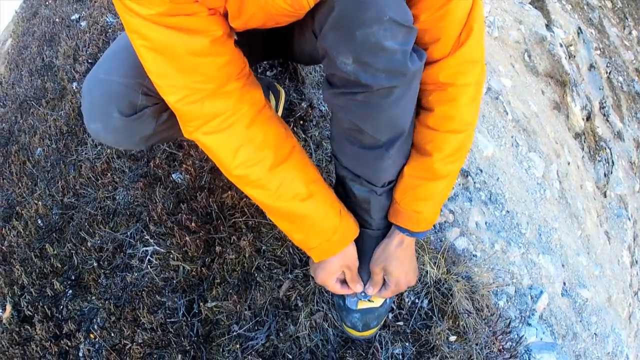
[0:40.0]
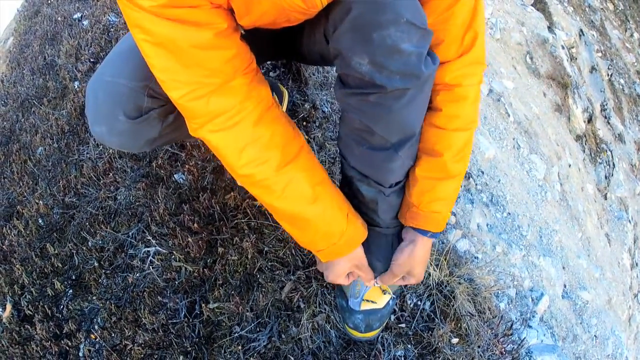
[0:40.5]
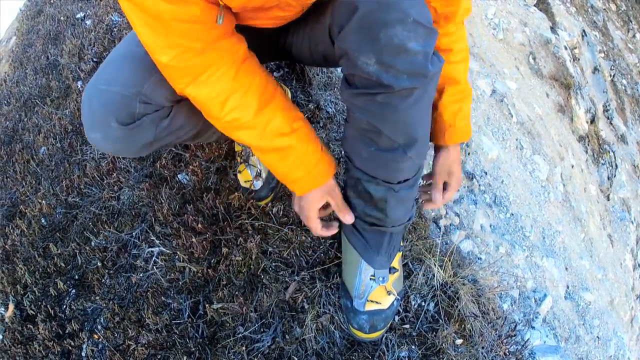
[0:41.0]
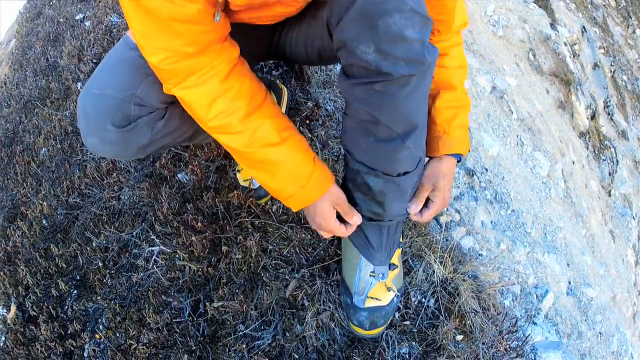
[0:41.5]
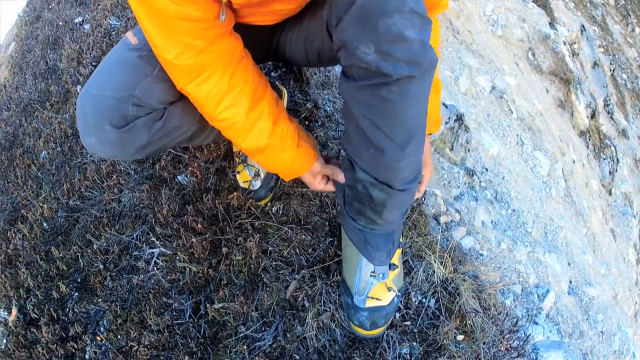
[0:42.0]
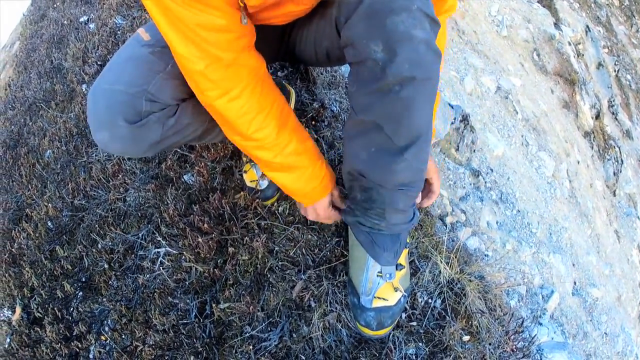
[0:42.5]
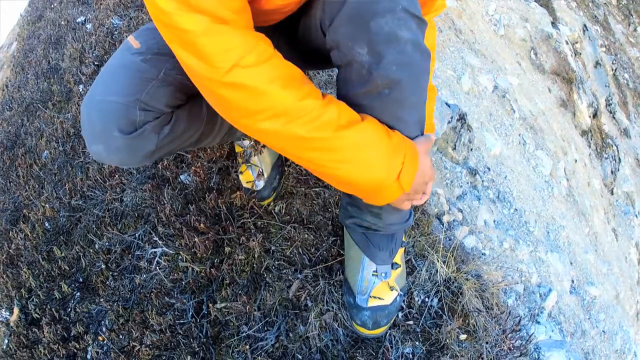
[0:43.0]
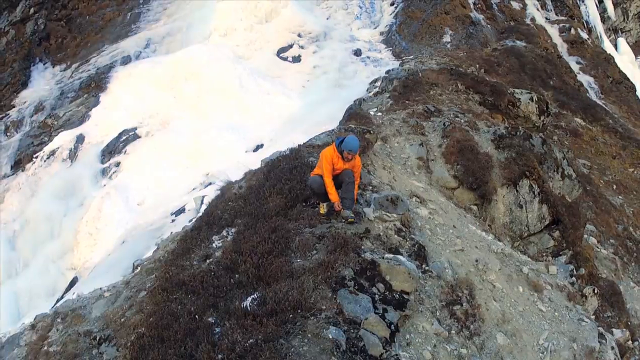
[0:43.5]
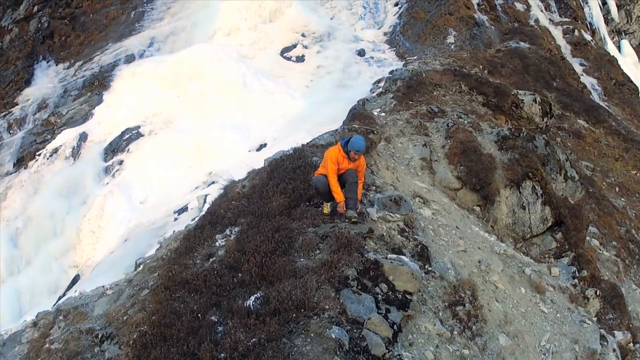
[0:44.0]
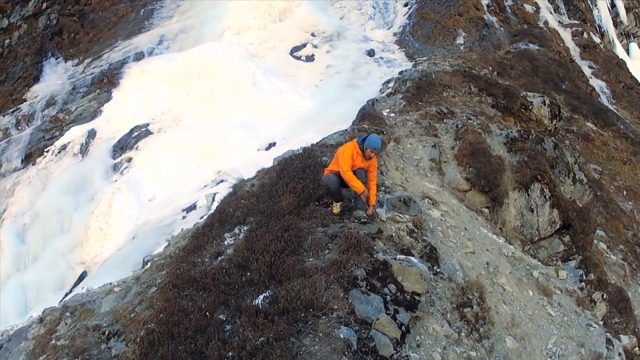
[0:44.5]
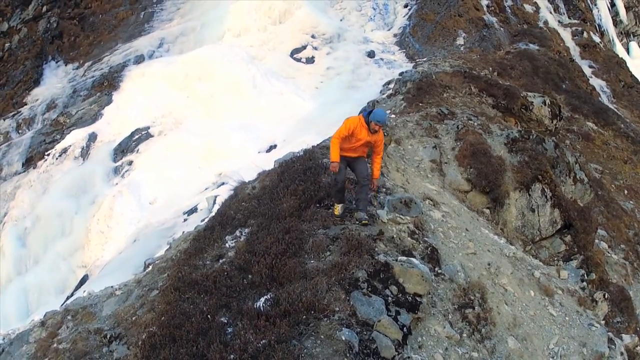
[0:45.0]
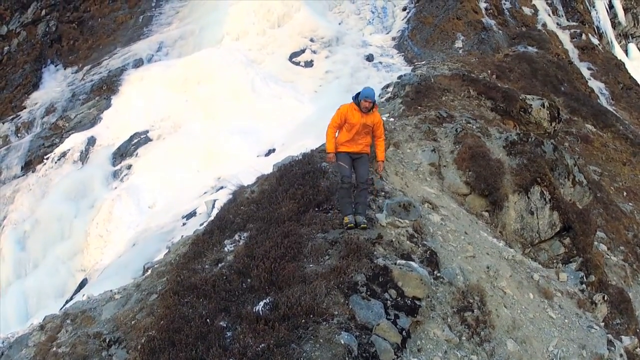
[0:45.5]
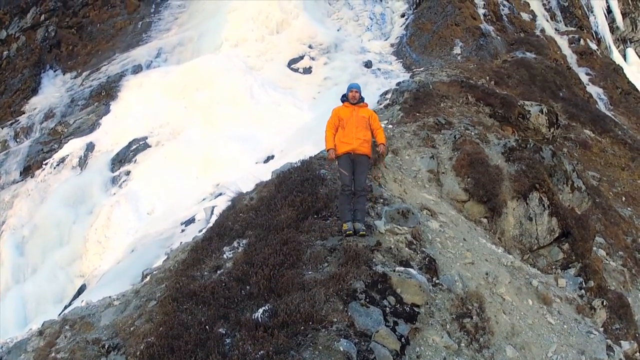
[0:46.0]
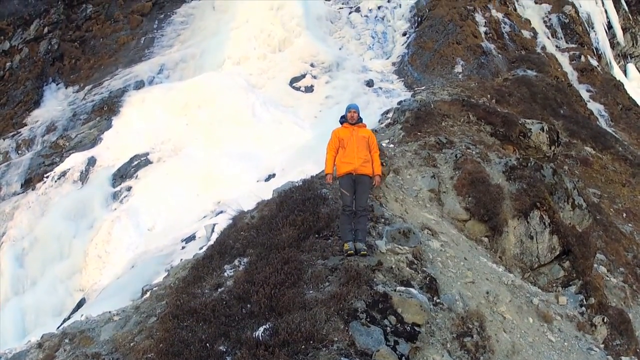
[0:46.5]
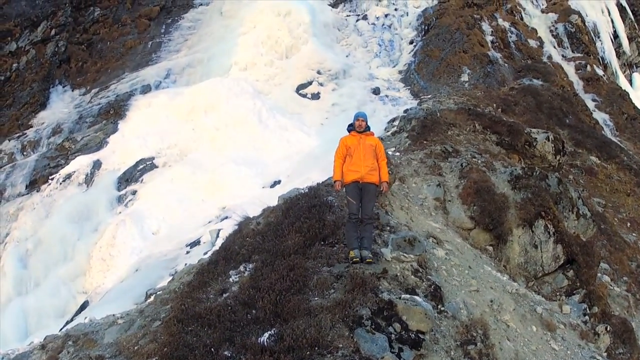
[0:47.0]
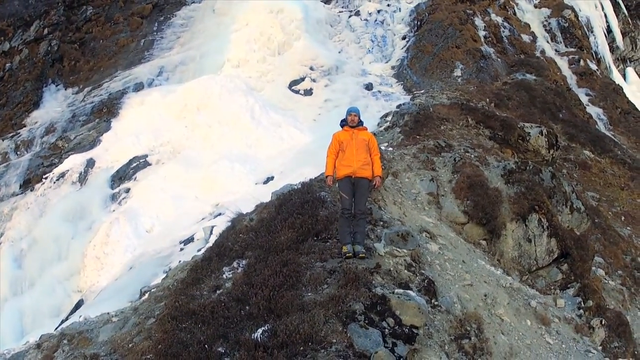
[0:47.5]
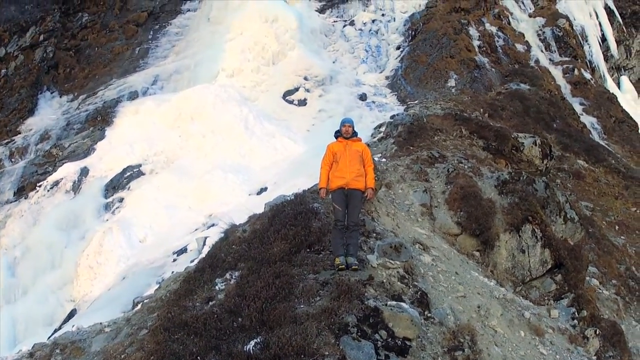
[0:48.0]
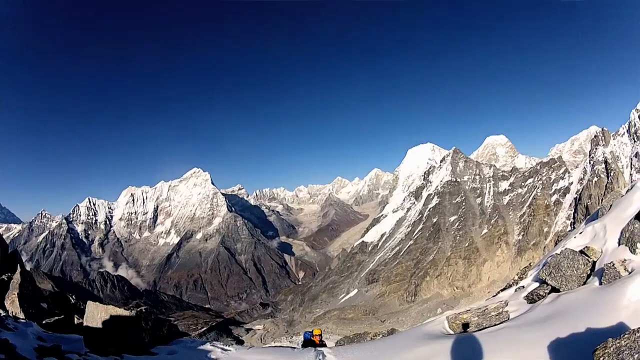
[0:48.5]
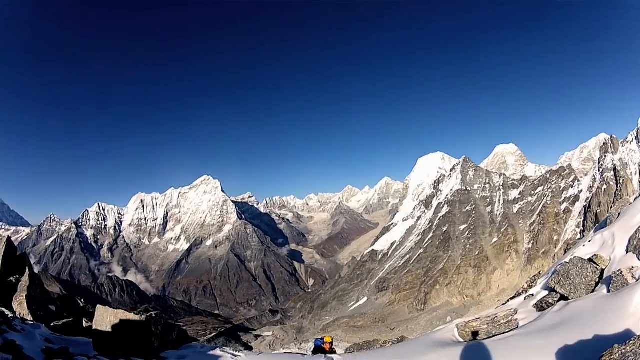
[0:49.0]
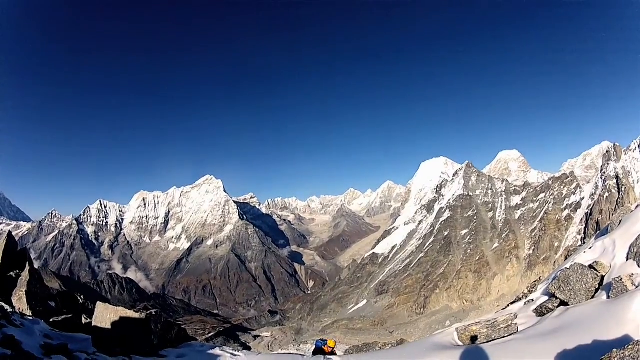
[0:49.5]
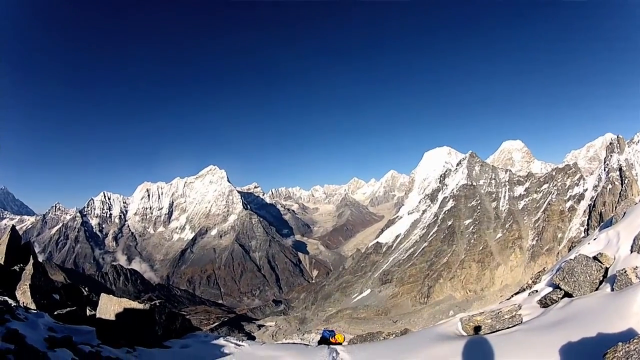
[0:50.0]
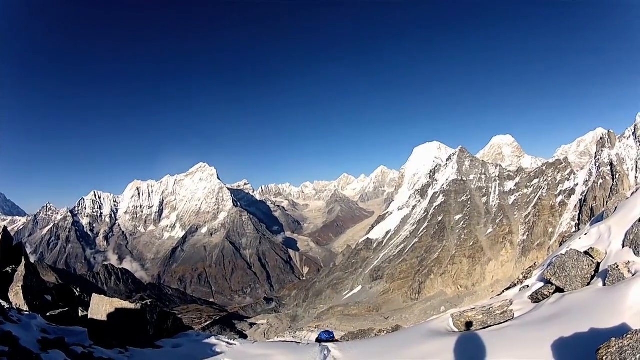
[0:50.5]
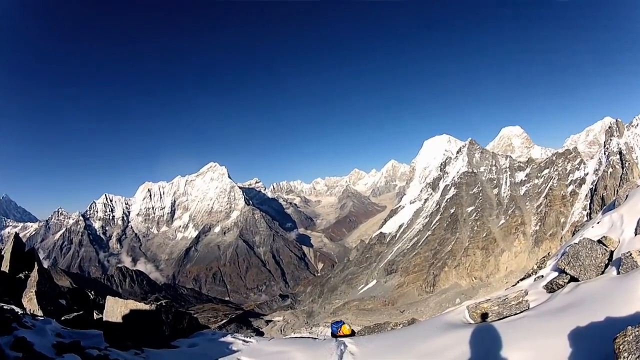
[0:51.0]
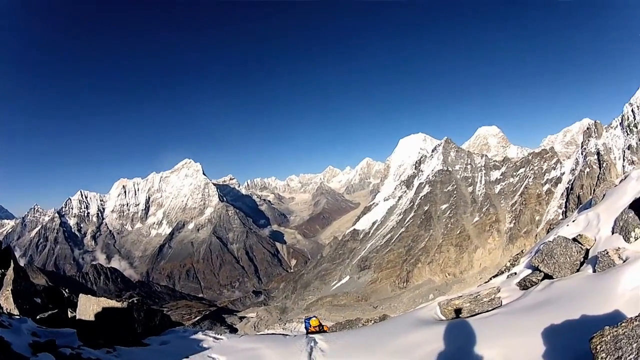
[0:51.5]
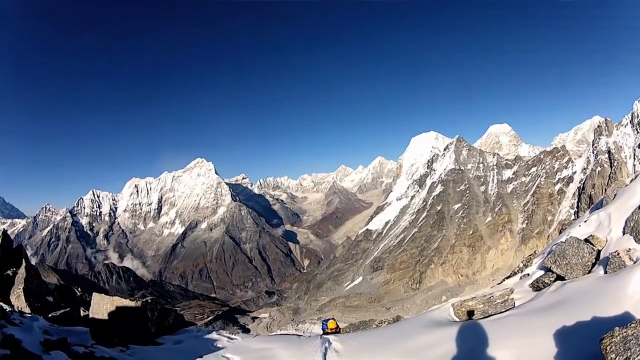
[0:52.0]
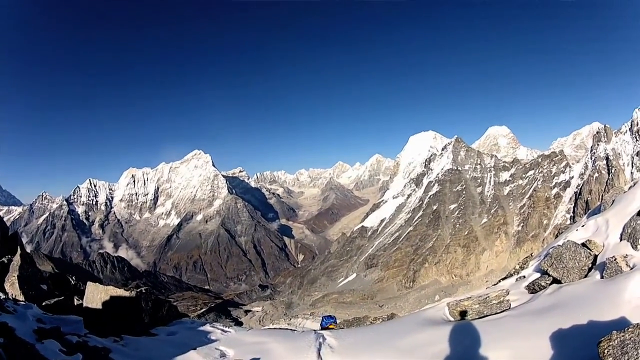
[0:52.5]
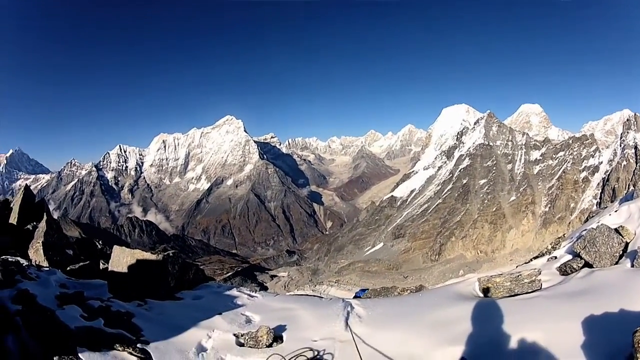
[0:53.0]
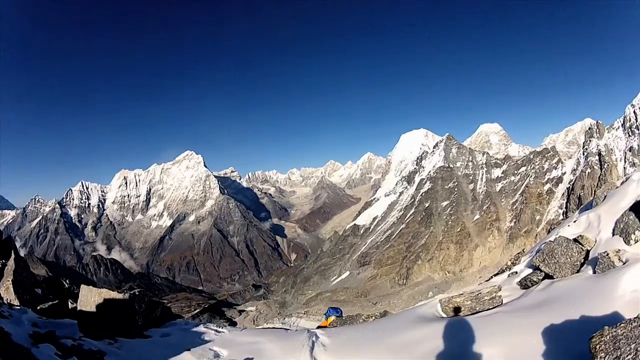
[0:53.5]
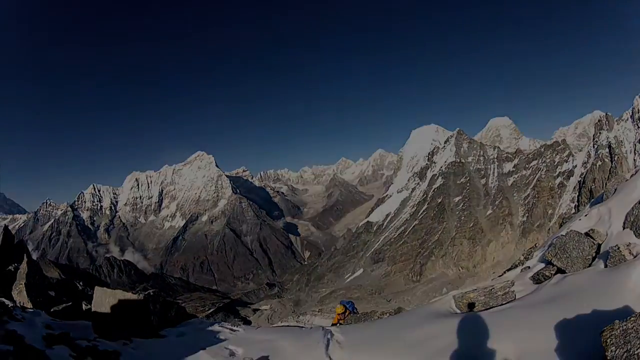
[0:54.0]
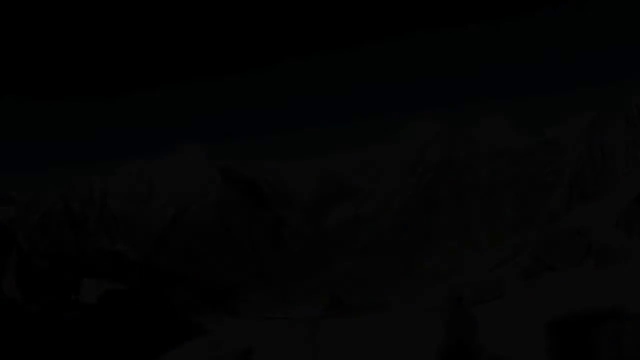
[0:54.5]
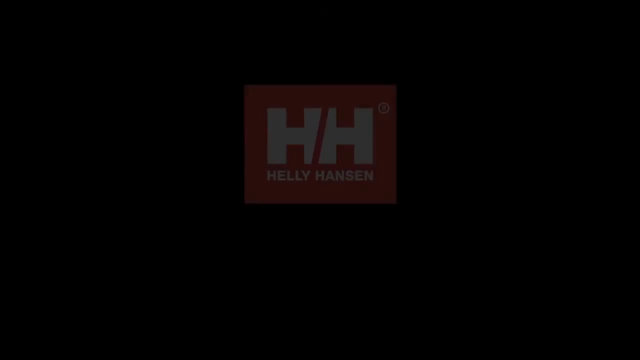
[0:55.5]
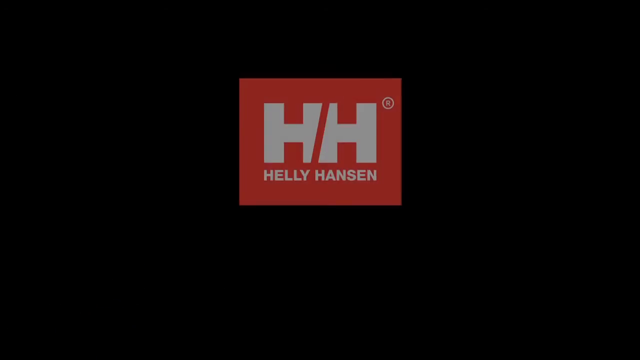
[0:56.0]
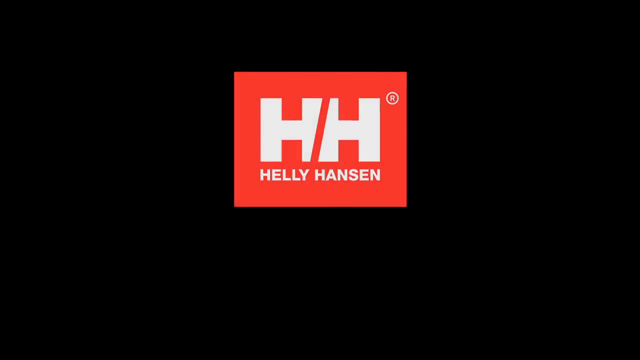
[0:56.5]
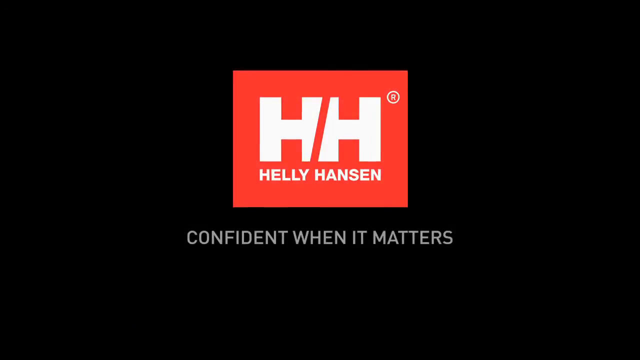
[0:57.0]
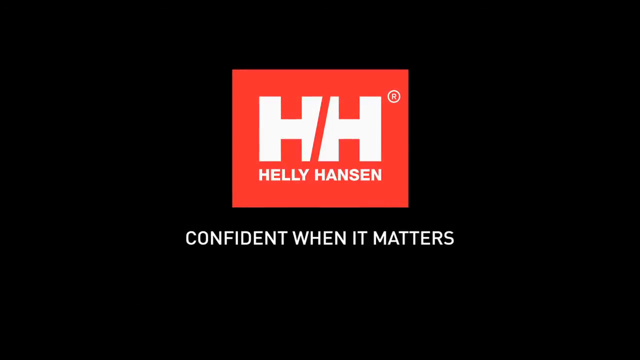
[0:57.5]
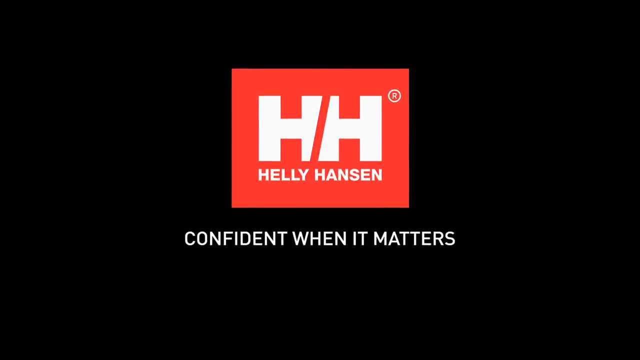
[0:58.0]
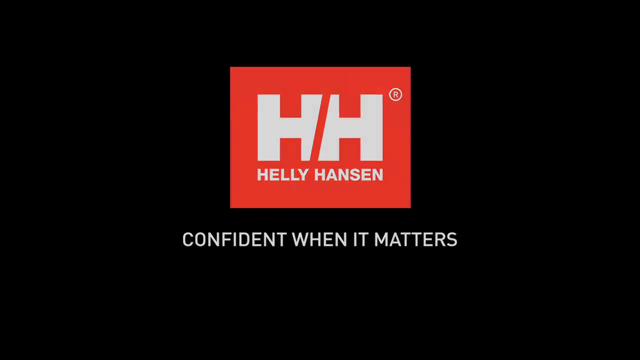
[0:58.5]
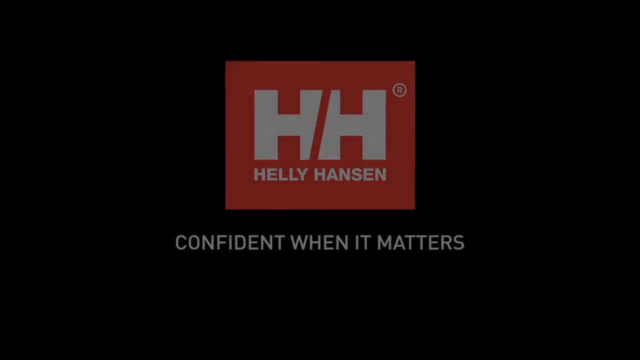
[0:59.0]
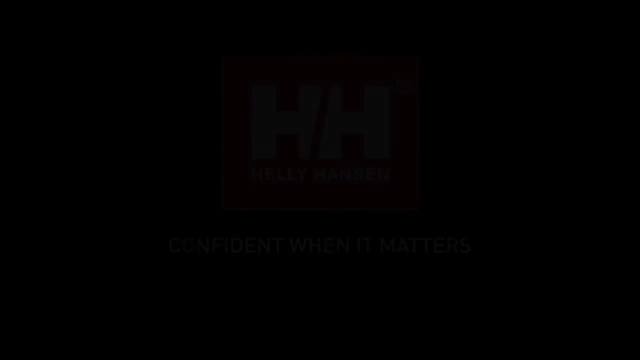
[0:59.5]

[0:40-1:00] The man bends over, kind of on the ground, attaching his snow pants by snapping them into his shoes. The view then shows mountain ranges high up in the air, with the camera moving around a little, and it slowly fades out. The text "Heli Hansen confident when it matters" appears, along with the HH logo and "Heli Hansen confident when it matters," all in capital letters. Behind the HH Heli Hansen logo is a red background, close to a square but more of a rectangle.